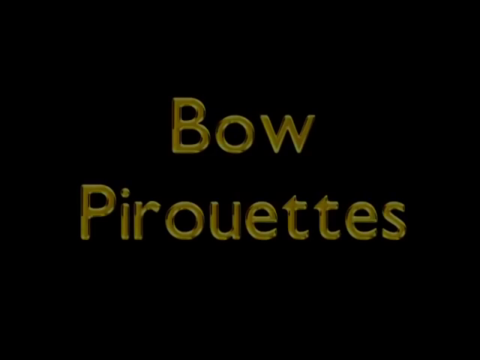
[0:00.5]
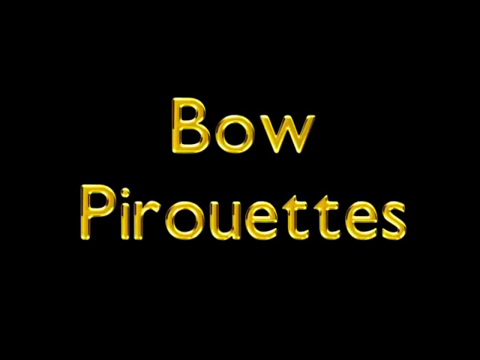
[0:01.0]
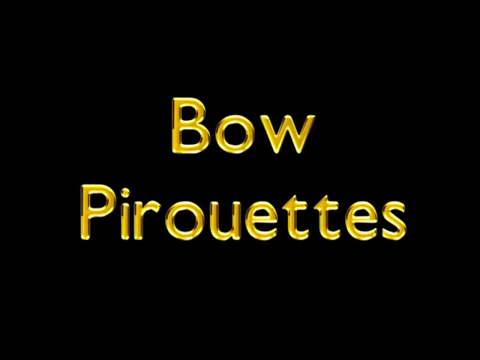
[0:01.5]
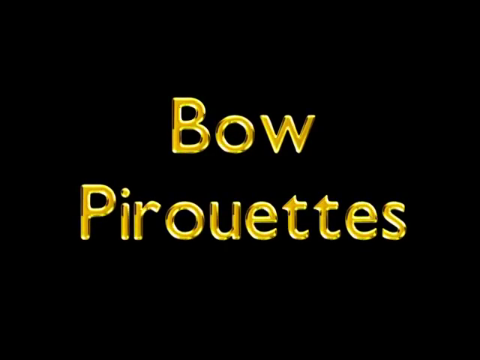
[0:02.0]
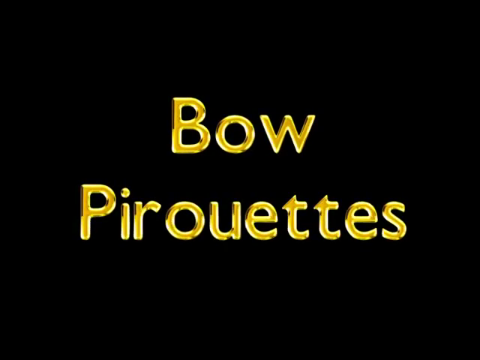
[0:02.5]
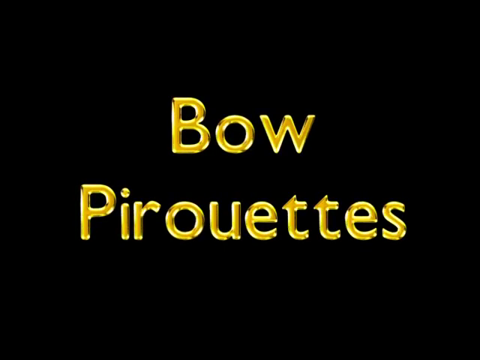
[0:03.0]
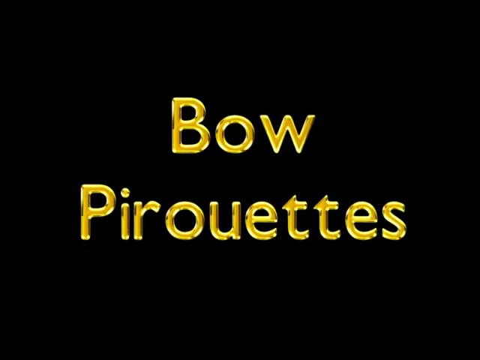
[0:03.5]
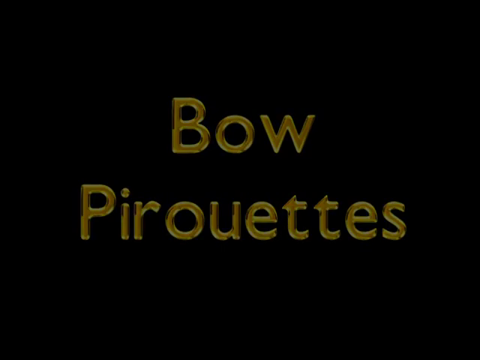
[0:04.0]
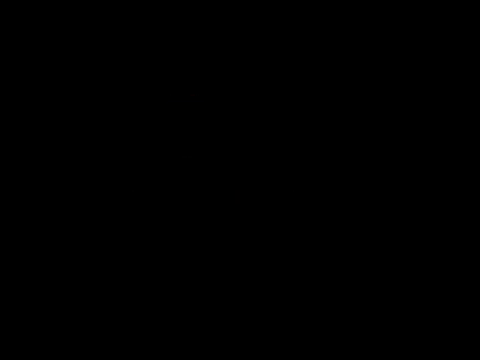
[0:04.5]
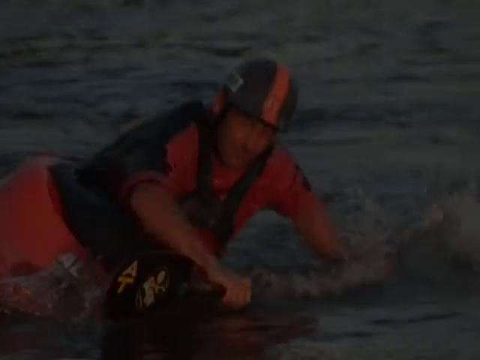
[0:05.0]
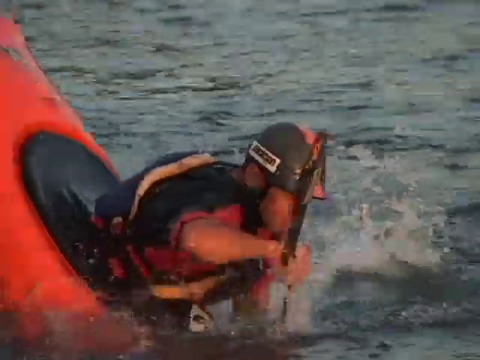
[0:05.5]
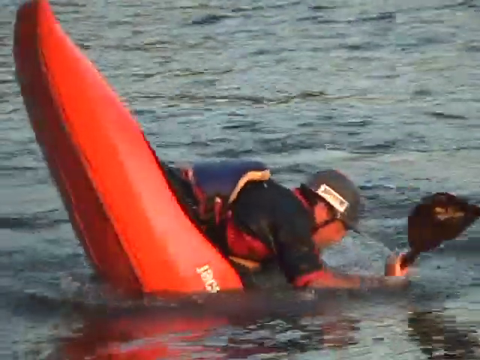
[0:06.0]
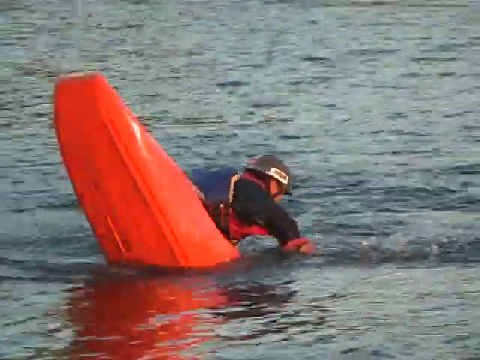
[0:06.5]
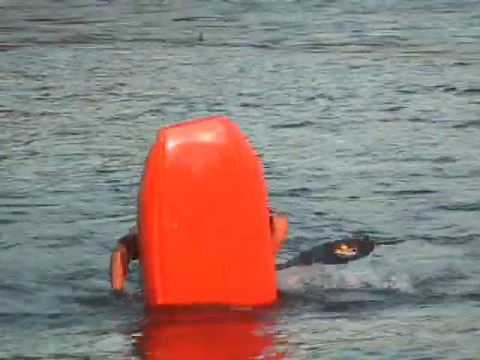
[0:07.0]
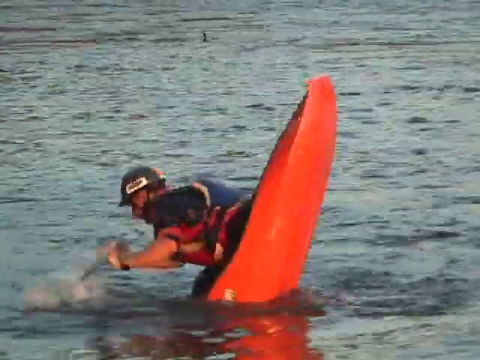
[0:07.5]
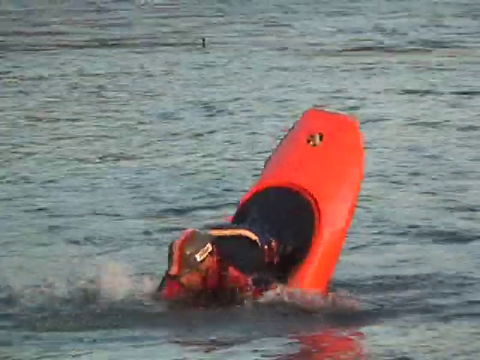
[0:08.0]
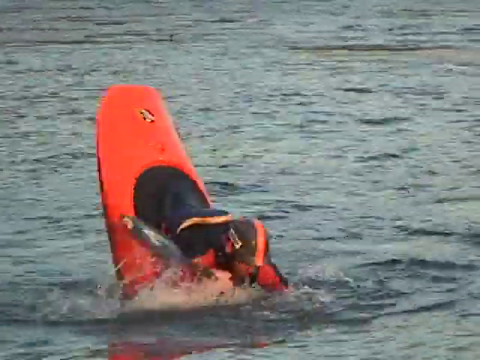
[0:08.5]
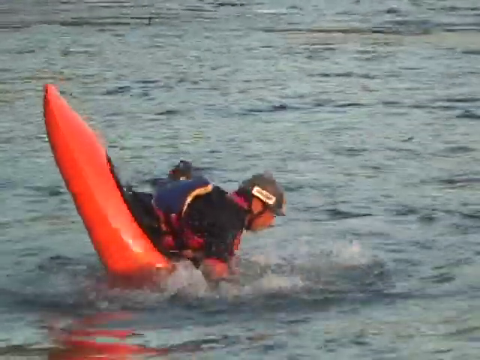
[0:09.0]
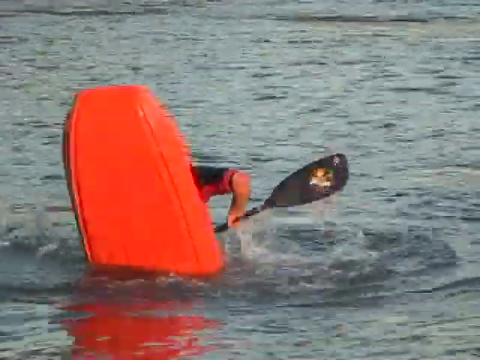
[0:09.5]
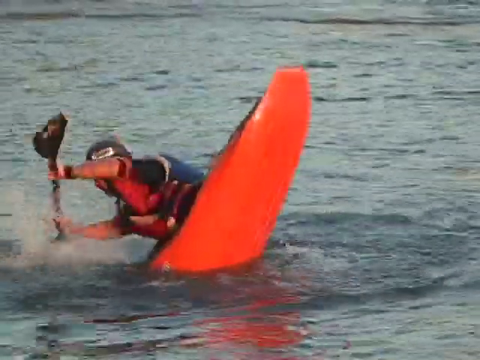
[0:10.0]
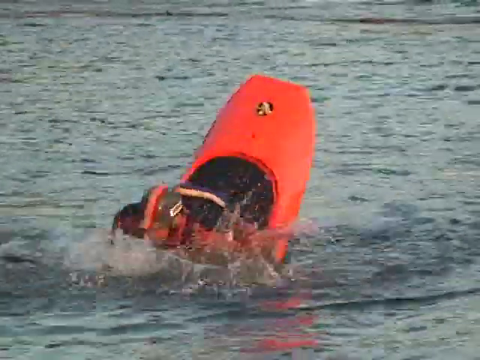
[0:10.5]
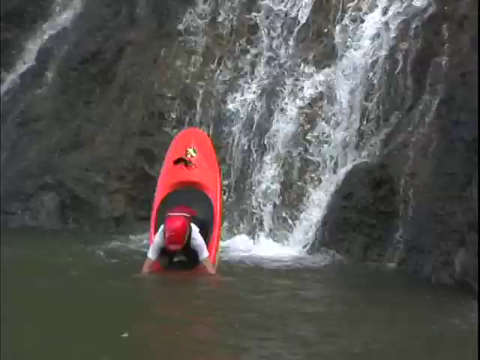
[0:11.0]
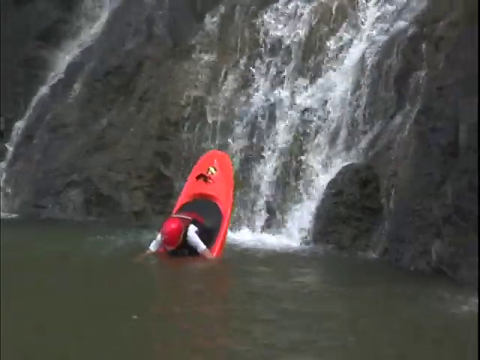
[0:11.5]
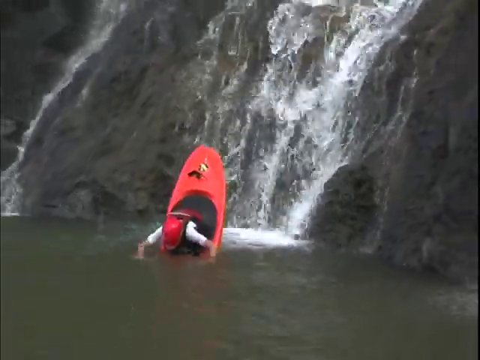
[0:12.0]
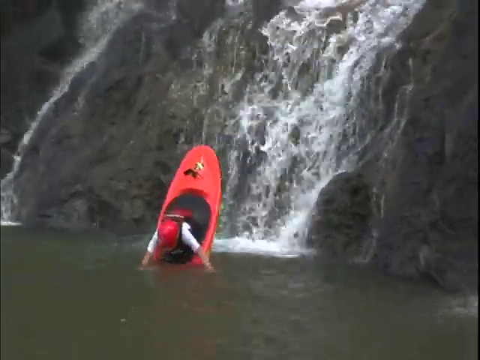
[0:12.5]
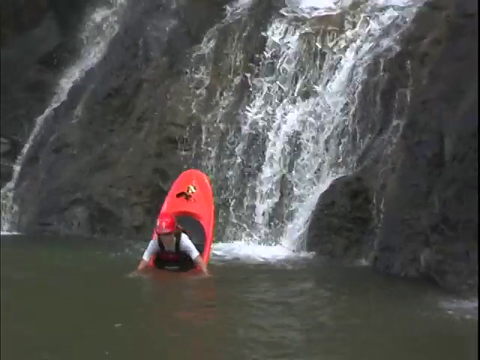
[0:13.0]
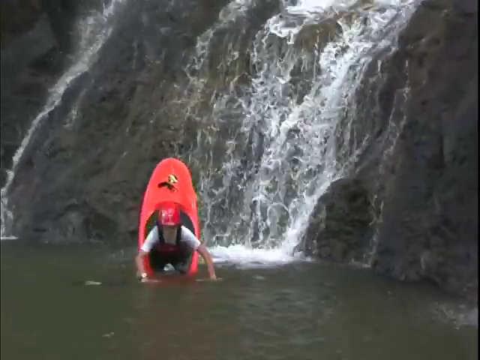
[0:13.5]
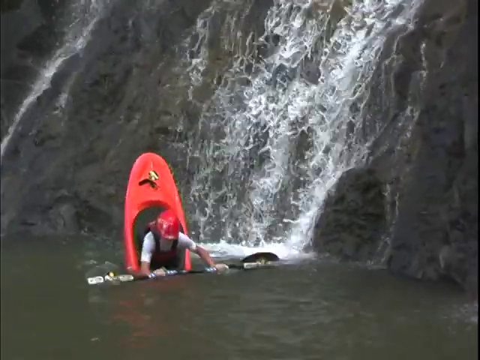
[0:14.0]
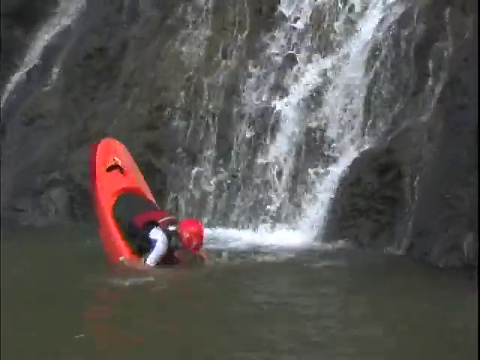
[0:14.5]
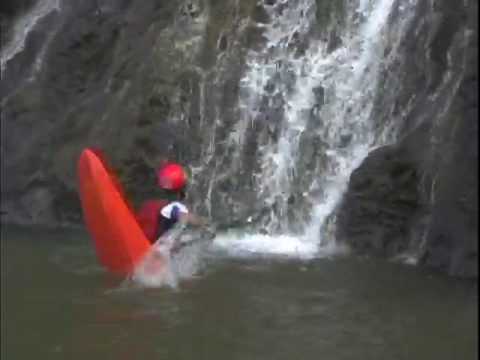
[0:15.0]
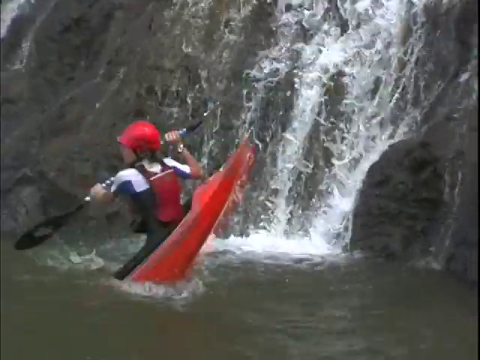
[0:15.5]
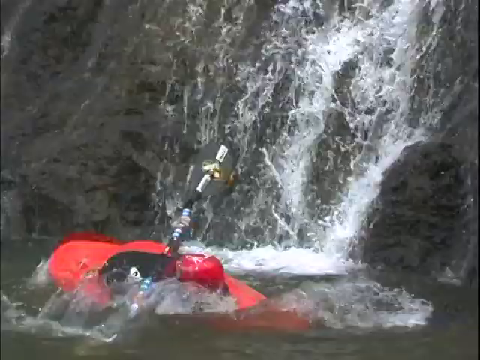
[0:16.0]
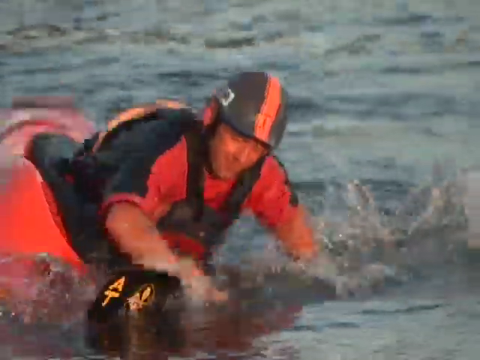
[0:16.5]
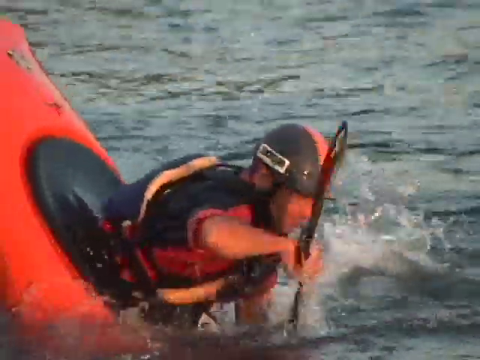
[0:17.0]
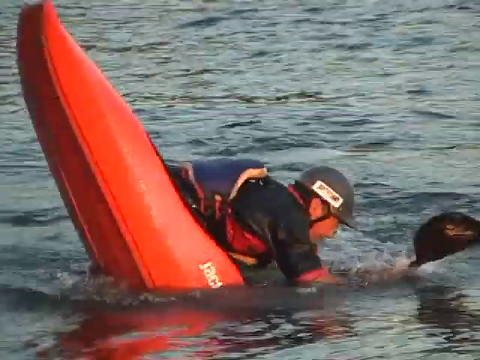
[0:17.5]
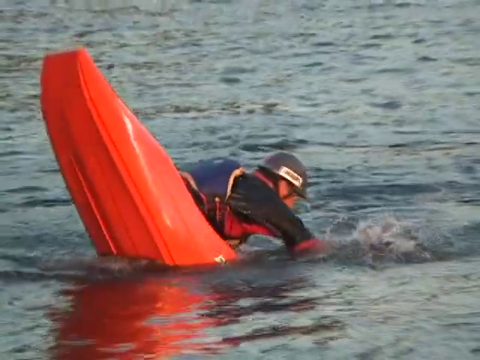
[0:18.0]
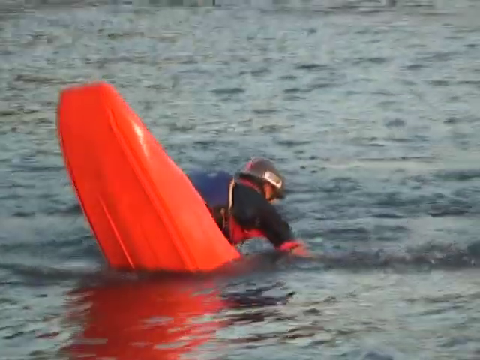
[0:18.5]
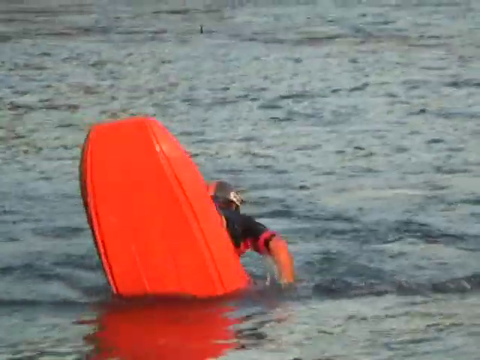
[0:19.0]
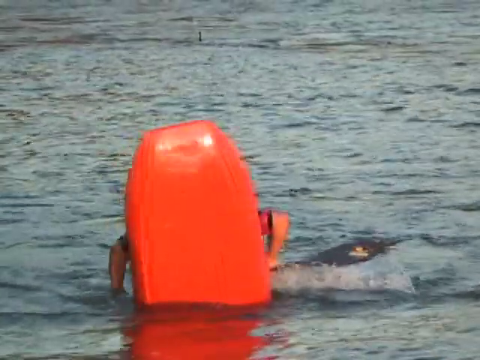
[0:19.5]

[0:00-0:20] The words "Bo Peritz" appear in gold-yellow lettering on a black background. After a transition, a kayaker is in the water with the end of the boat facing up while they face downward. They appear to hold a paddle and go around 360 degrees in circles, hitting the water and splashing very hard as they try to keep themselves afloat. A second kayak rider is then shown in a different environment, next to a waterfall. The video transitions back to the original kayaker, who has a very large neon boat or kayak and wears a life vest and a helmet. As he struggles to stay afloat, the water is calm and not moving ferociously; it is splashed around only by the person trying to stay up.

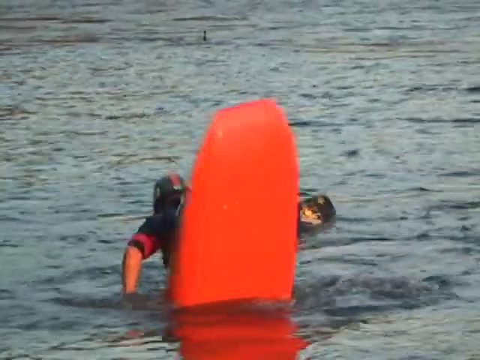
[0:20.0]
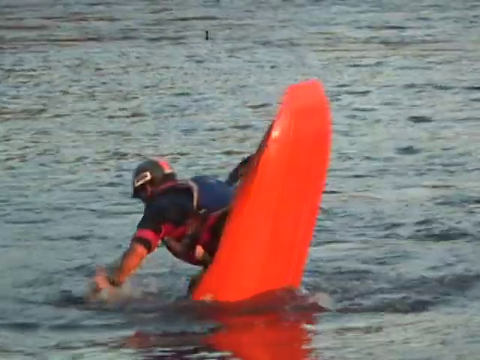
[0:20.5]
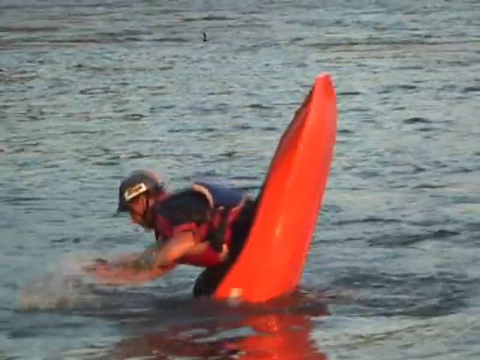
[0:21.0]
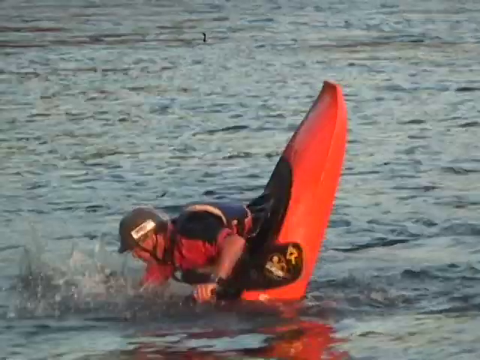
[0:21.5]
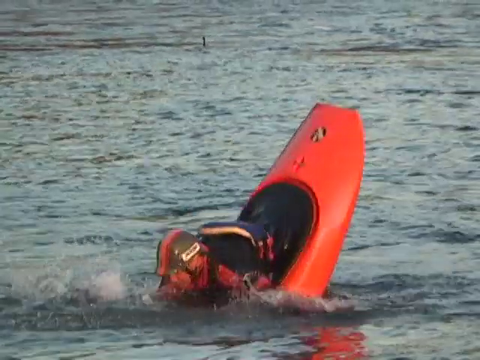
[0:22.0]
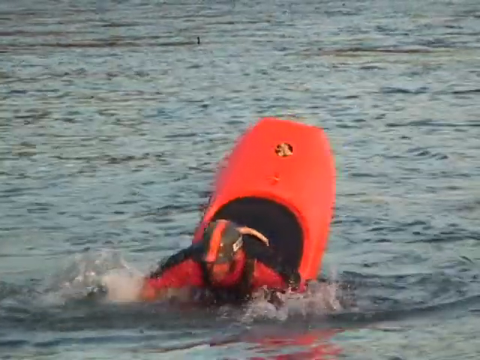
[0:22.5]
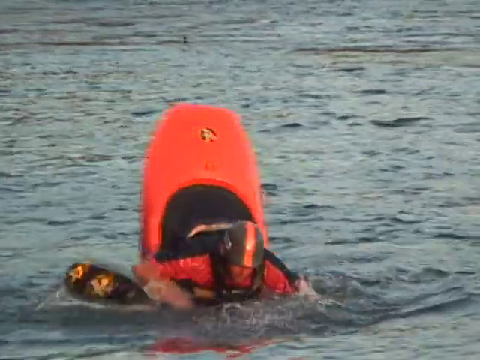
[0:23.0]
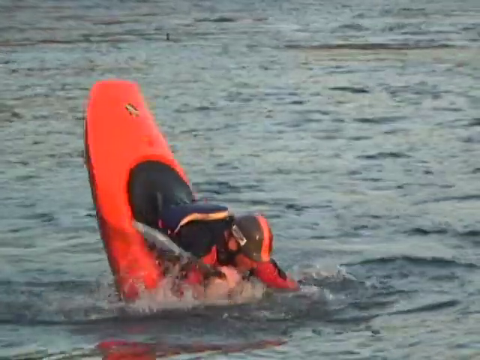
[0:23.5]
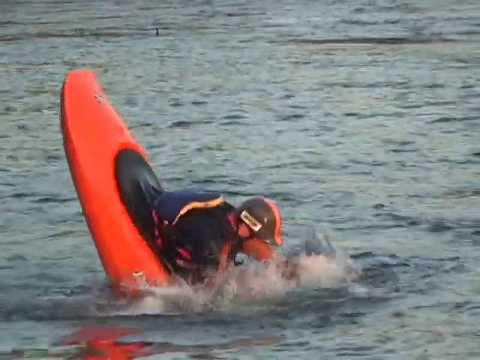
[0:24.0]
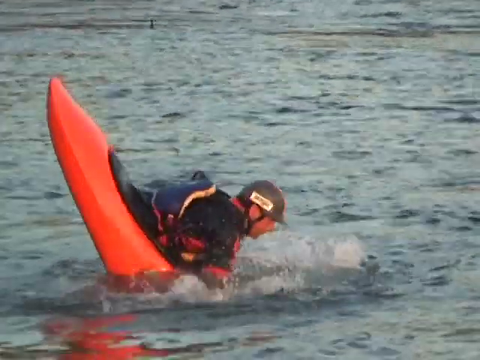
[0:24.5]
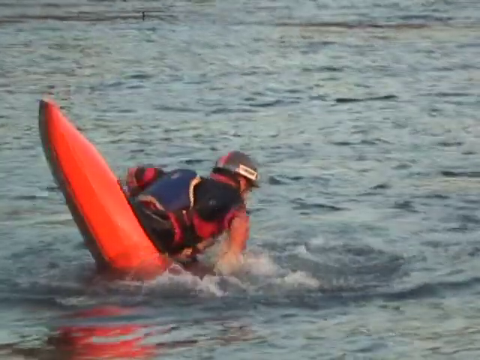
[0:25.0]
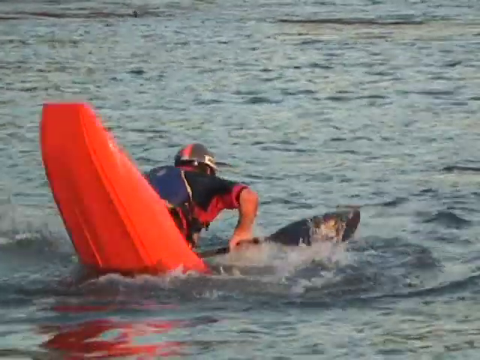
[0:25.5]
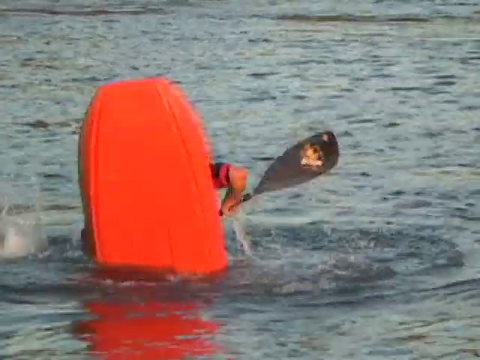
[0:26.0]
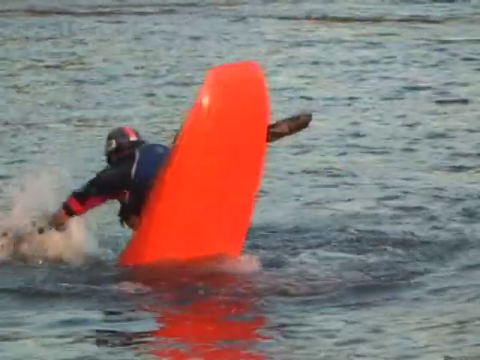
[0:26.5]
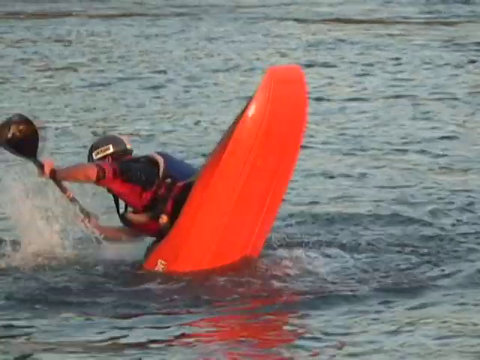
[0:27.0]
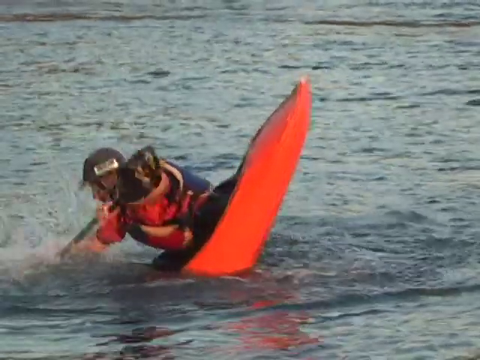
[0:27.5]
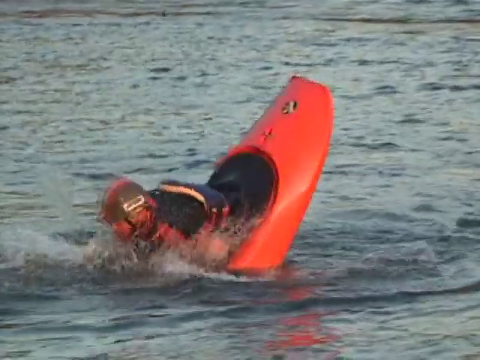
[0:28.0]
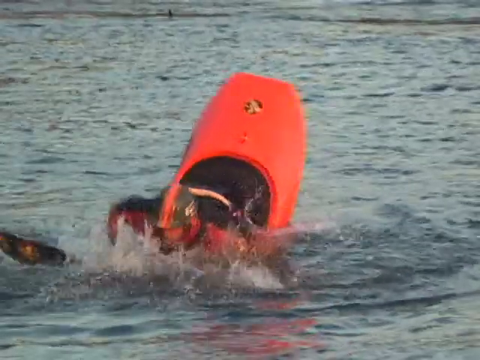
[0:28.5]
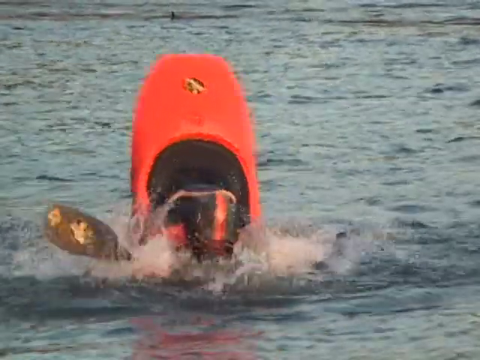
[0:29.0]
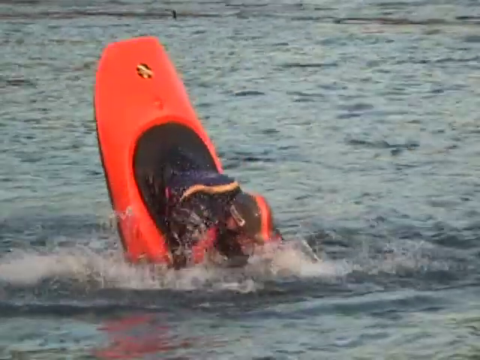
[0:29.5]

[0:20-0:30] The kayaker moves in a circle and looks very frustrated amid chaotic splashes. The footage is now in slow motion. As he tries to move around, he keeps one end of the kayak above and one at the bottom, and he looks as if he is falling forward. As he moves in a circular pattern, the camera zooms in toward his face, and he appears to be smiling. He wears a helmet and no gloves. He holds the paddle at its very far ends with his left and right hands, splashing and striking the water to keep himself afloat.